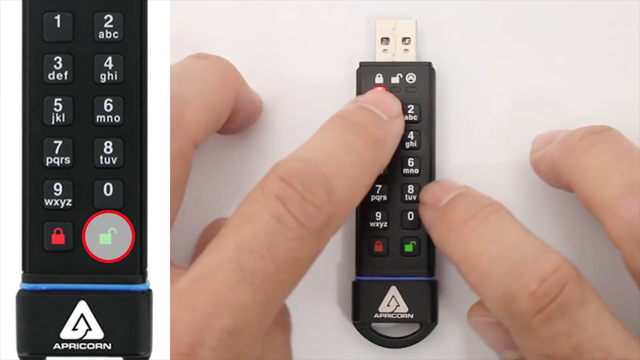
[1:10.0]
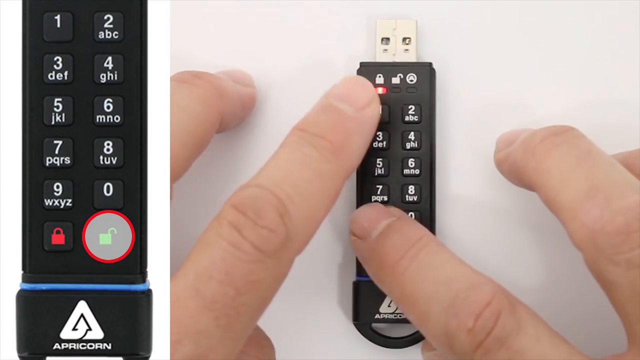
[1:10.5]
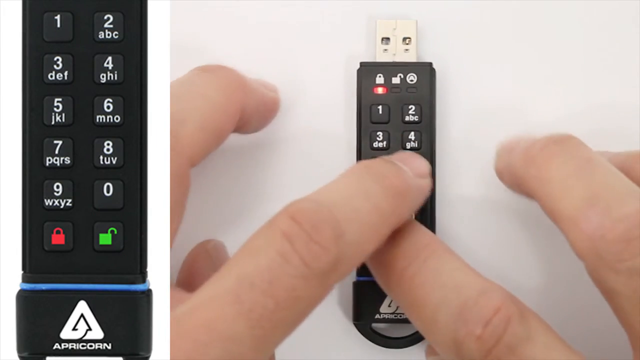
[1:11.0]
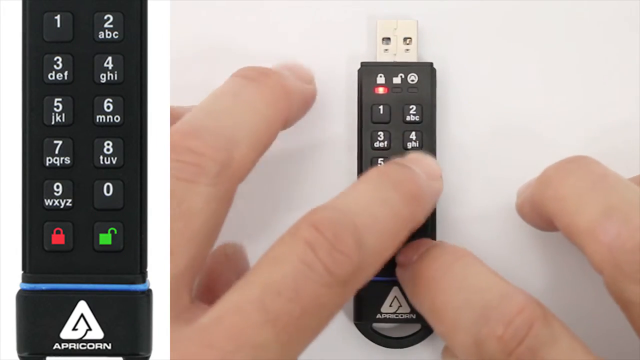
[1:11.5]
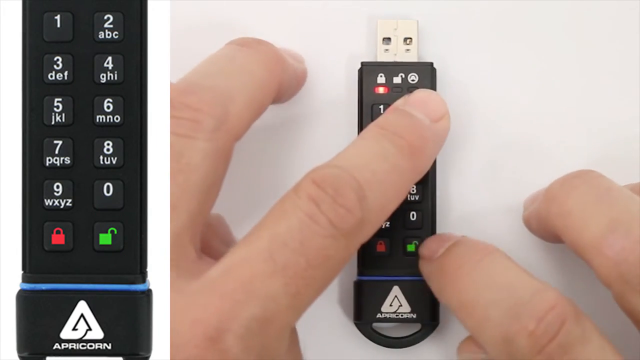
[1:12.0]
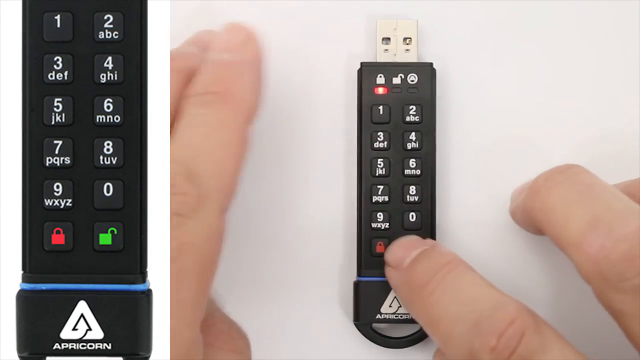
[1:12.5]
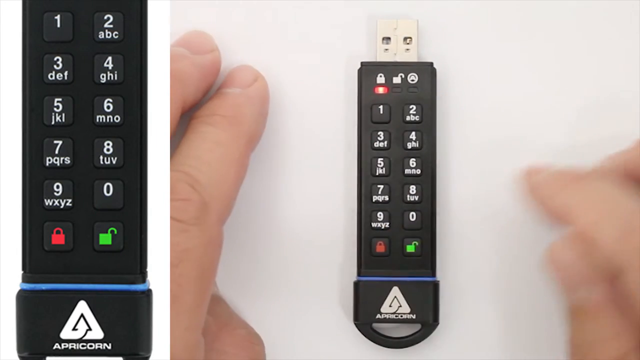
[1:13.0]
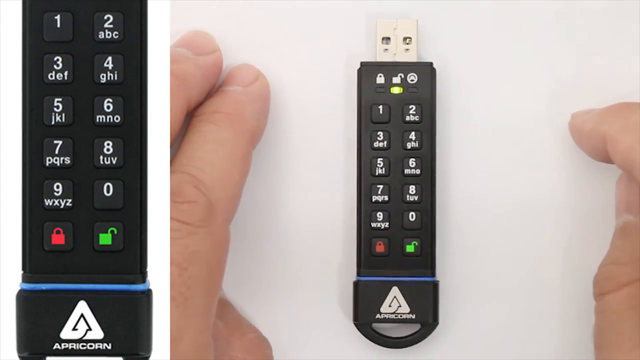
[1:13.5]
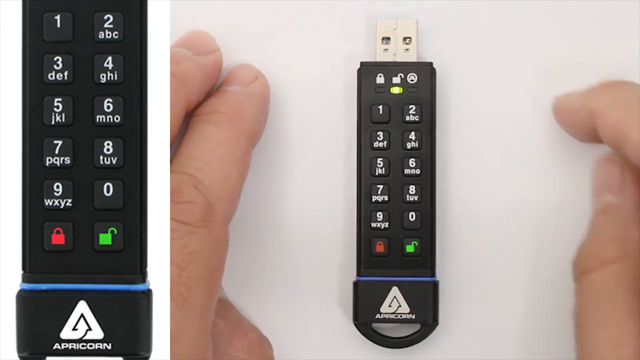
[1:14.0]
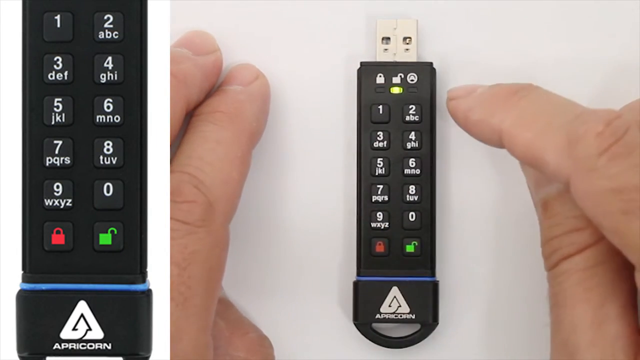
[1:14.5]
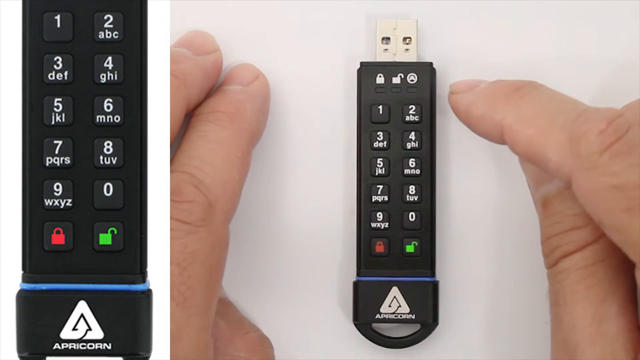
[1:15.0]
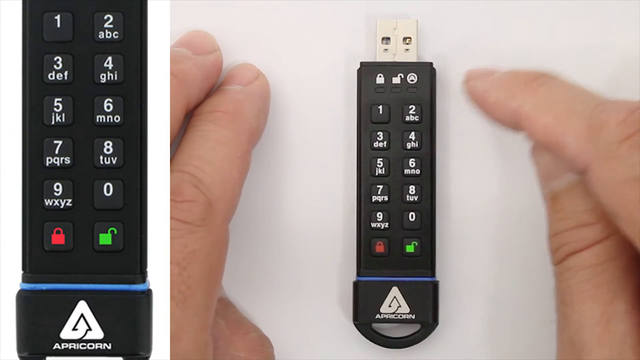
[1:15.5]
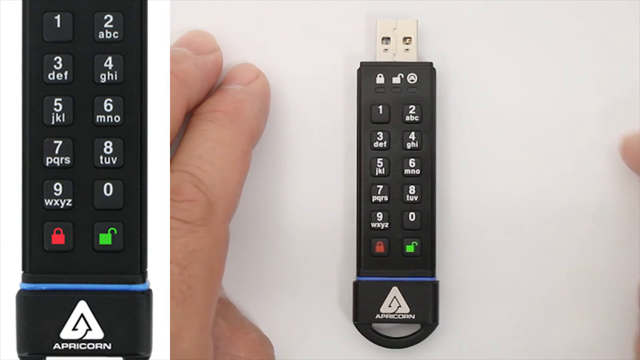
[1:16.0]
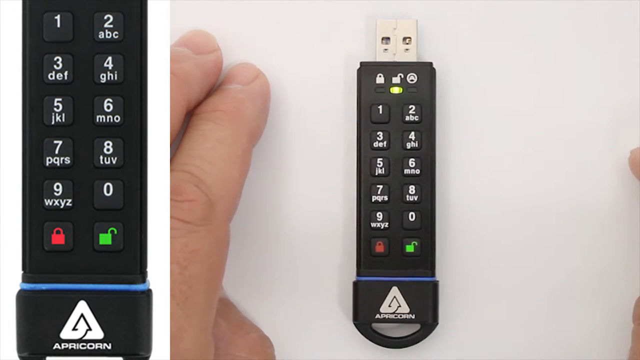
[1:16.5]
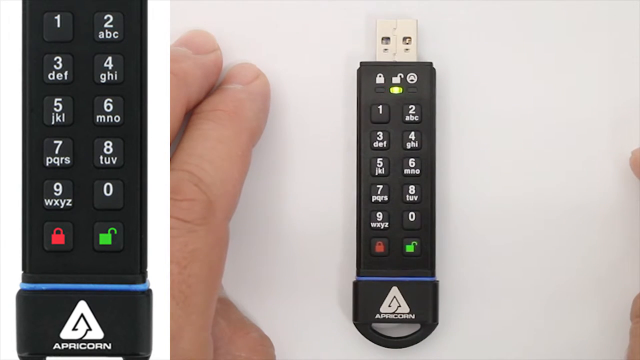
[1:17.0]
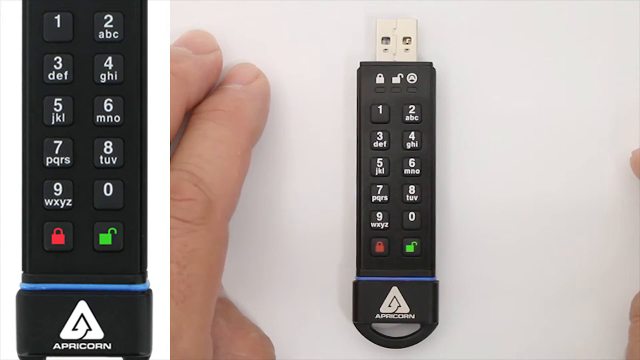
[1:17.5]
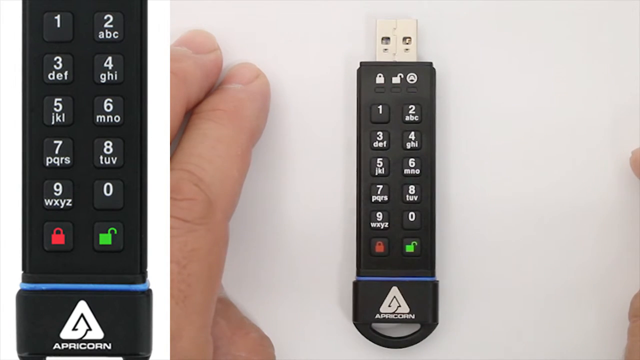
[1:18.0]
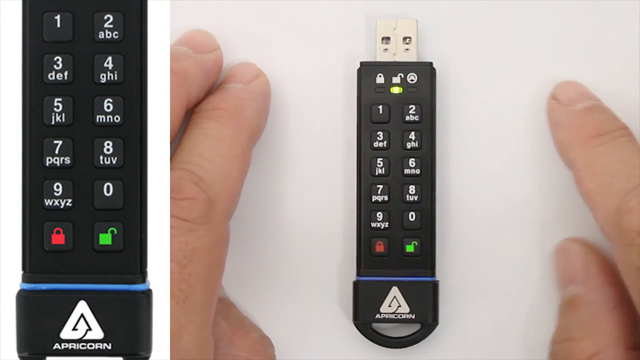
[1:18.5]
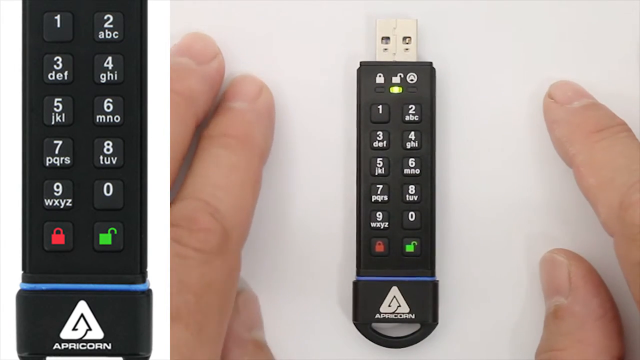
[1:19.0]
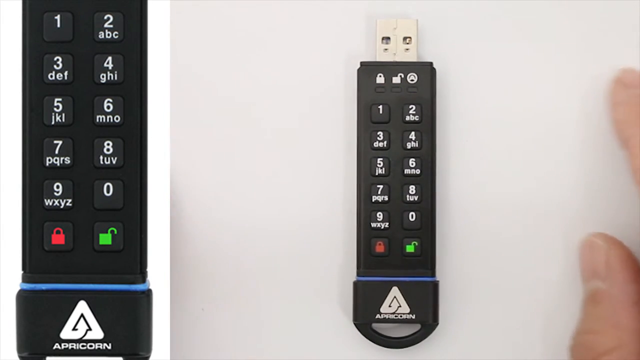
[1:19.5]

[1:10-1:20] The device's keys are shown as a man's two hands press them. He presses the green password unlock button, a beep follows, and he enters the code, after which the device unlocks or locks.